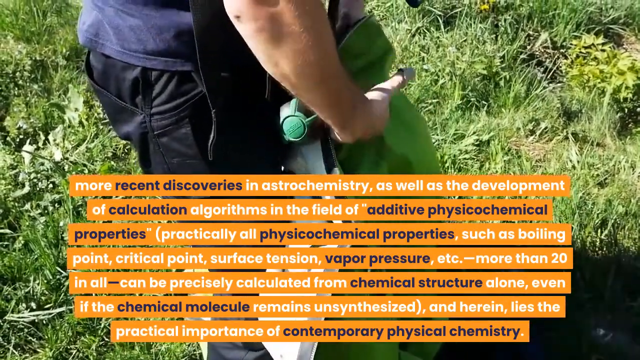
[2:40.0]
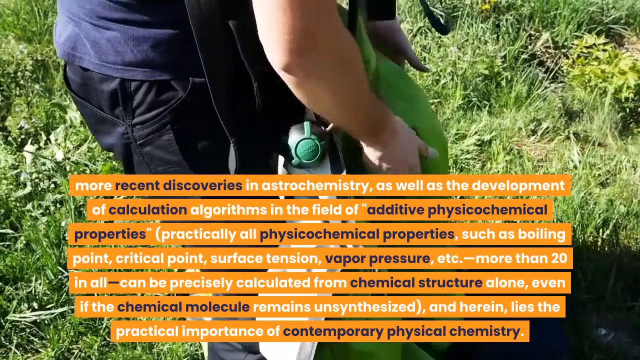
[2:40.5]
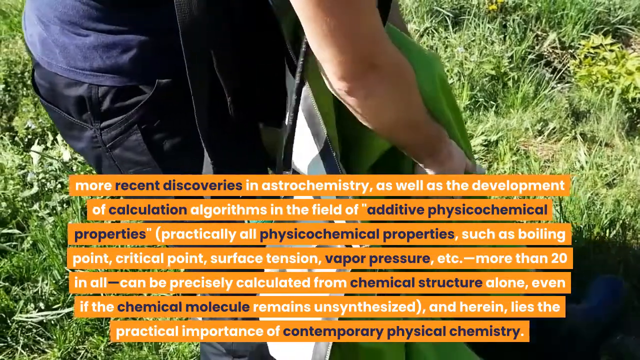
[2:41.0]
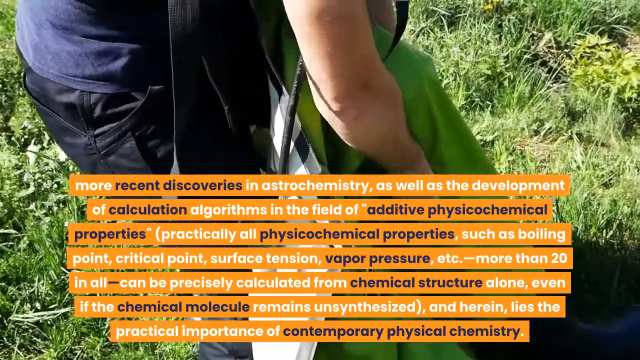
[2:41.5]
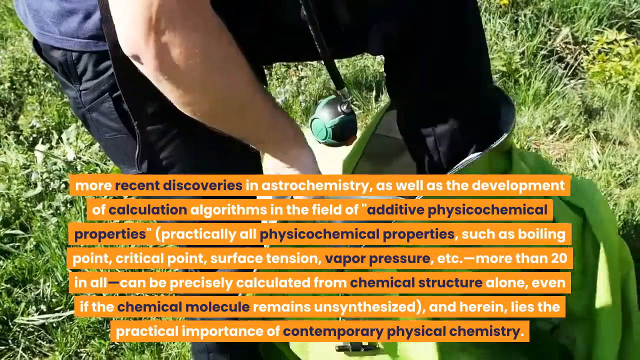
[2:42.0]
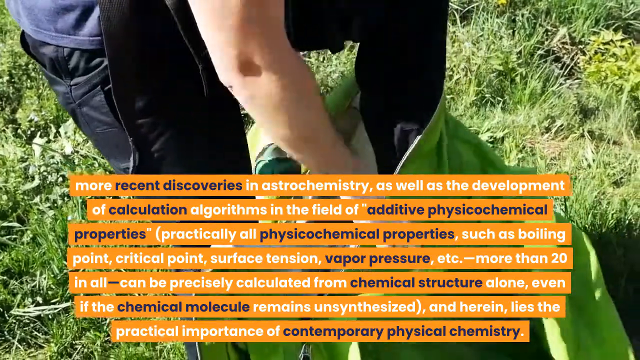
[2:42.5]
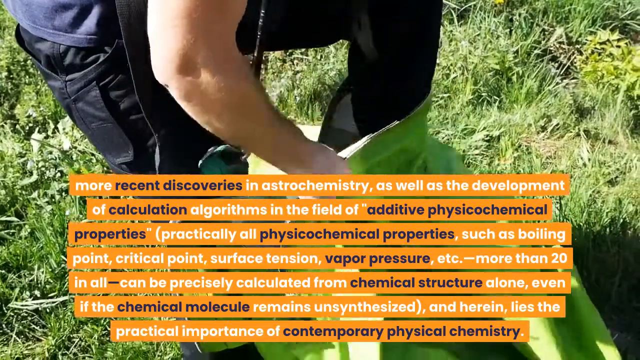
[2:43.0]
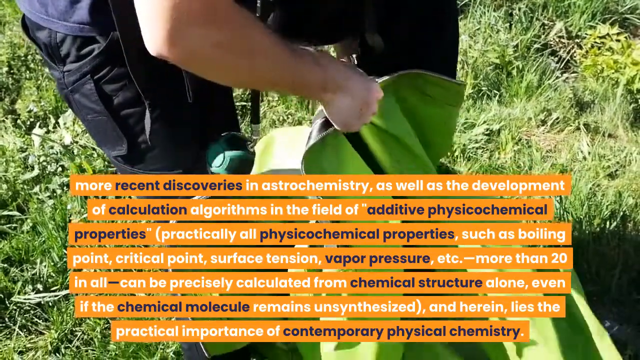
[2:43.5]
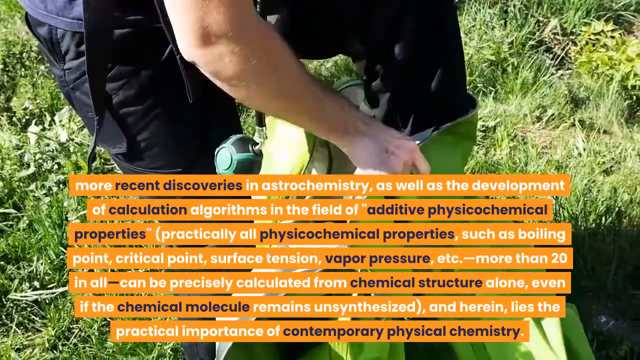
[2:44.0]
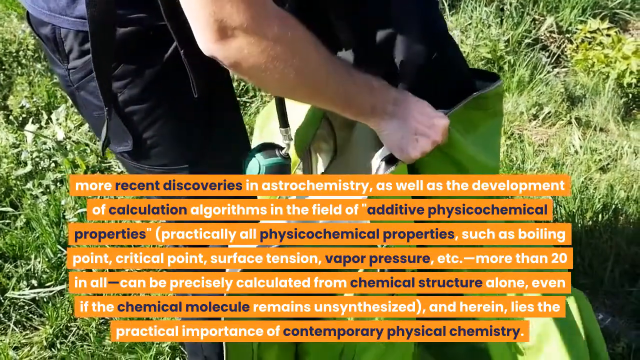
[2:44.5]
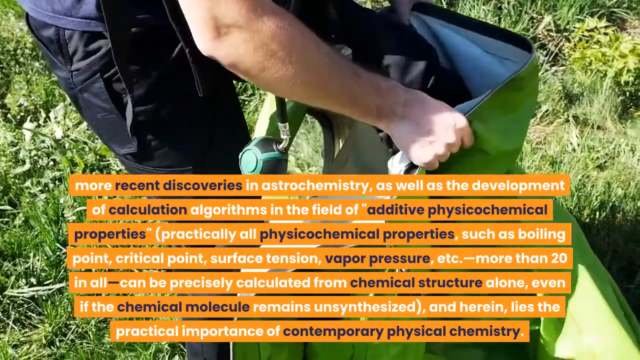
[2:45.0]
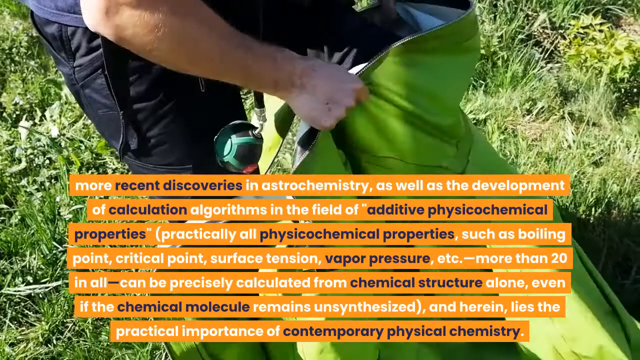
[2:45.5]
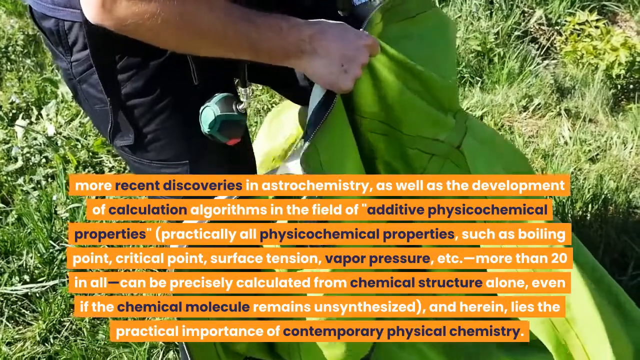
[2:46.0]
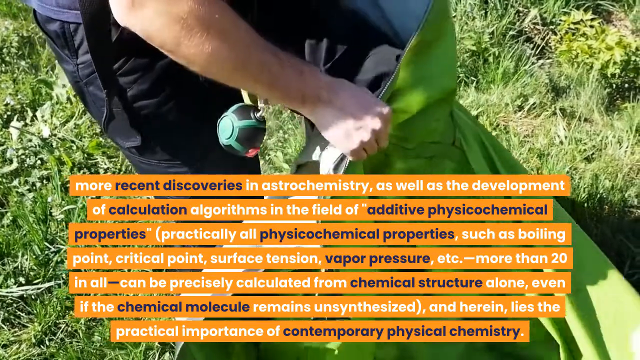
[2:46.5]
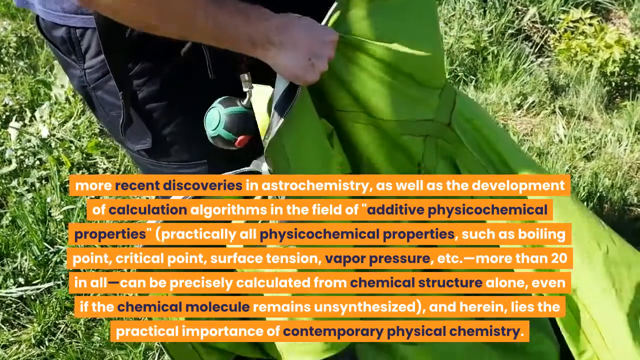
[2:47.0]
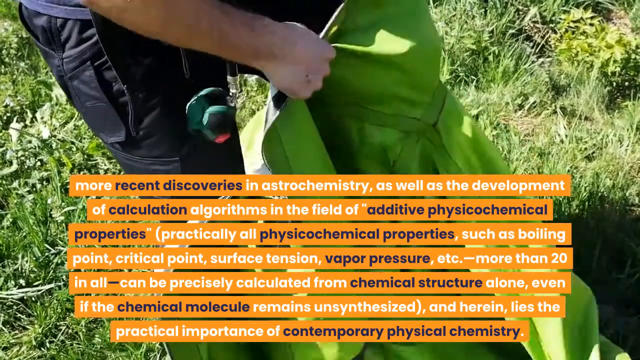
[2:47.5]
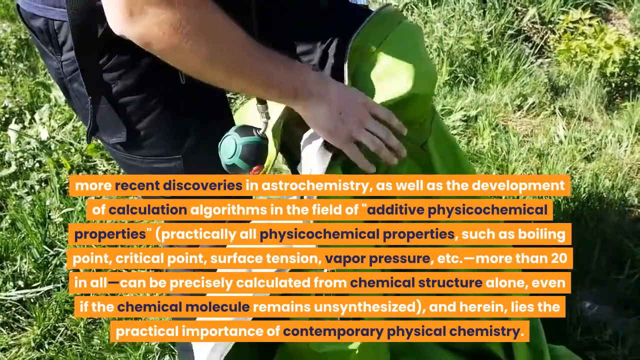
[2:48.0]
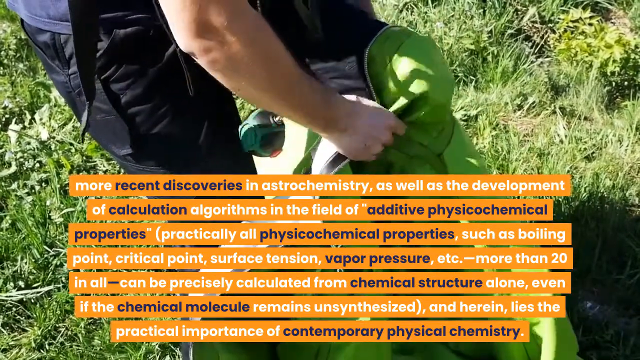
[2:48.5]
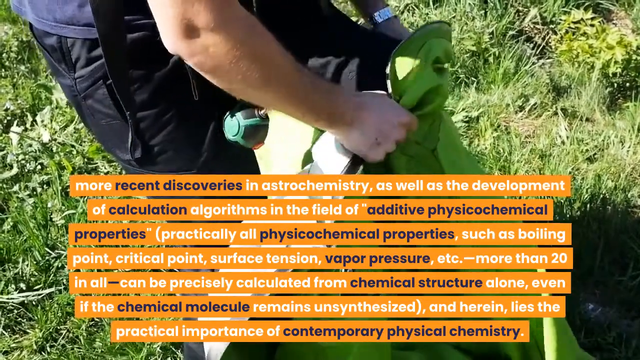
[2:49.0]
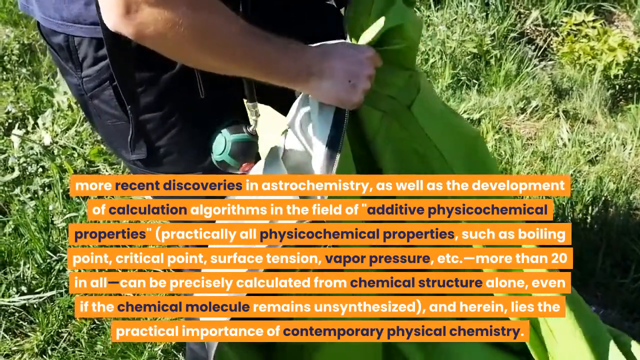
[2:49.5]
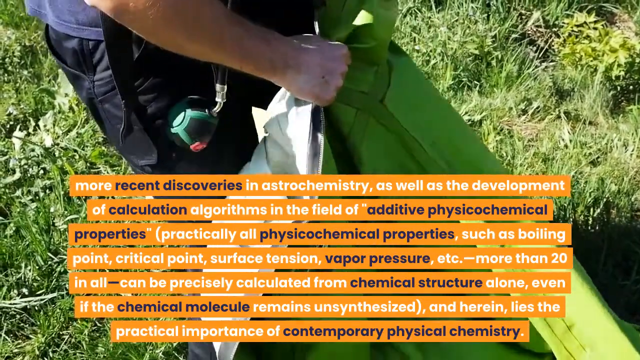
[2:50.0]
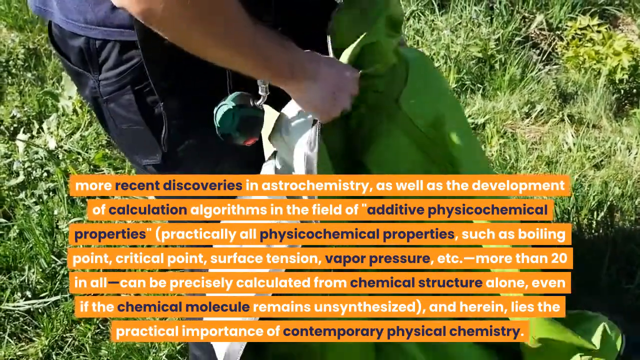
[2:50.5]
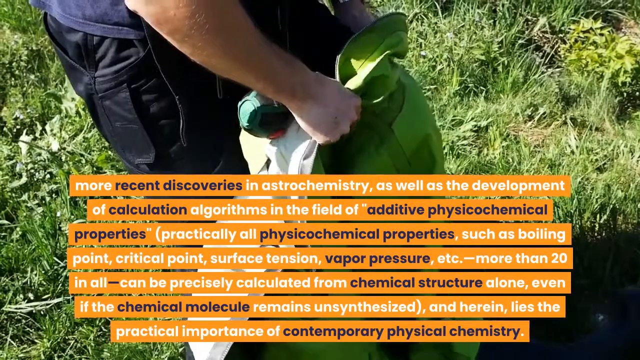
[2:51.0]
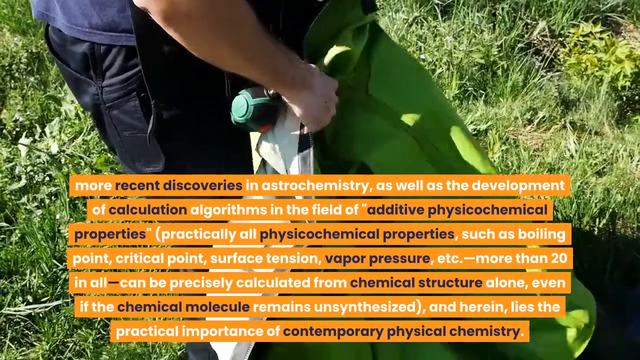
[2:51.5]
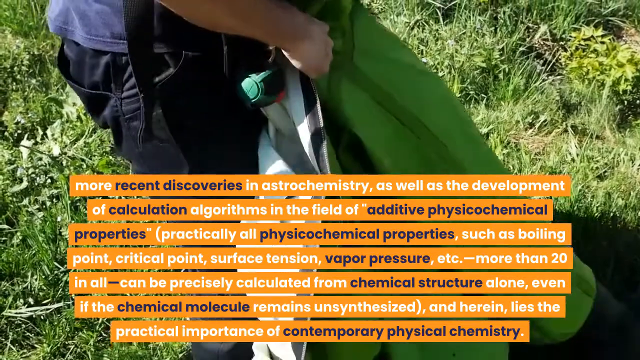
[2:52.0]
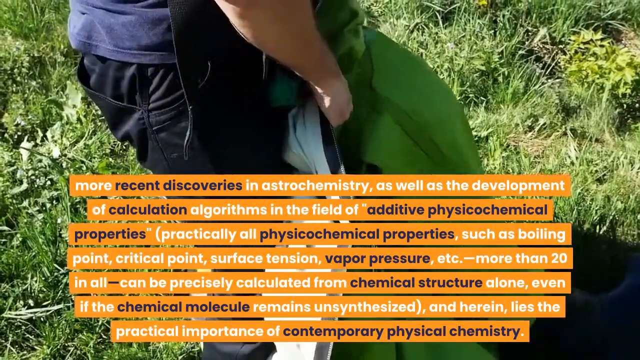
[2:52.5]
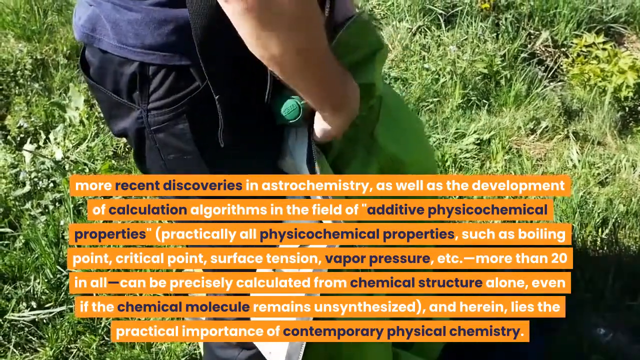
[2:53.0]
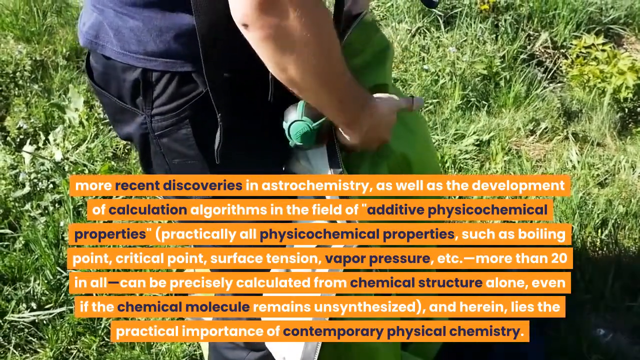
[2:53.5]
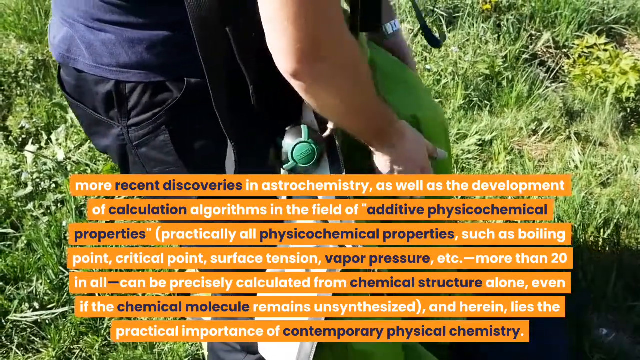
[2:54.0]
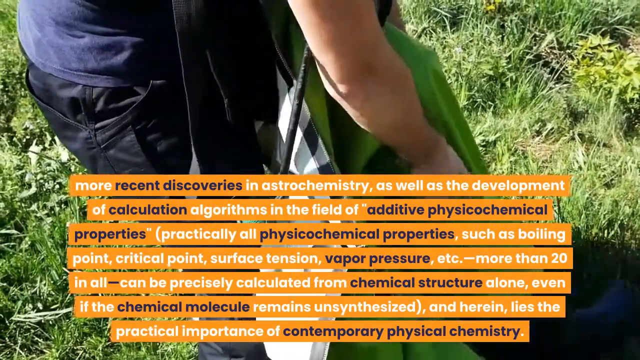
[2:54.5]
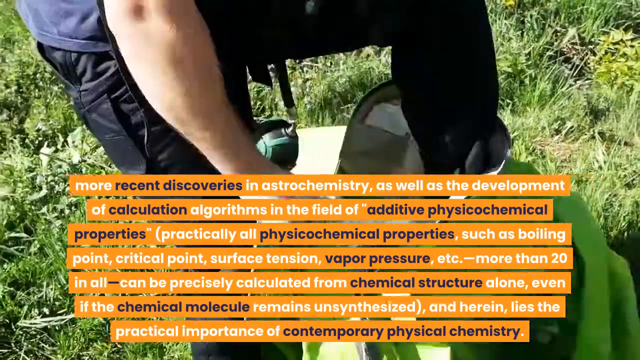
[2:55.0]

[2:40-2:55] Behind the caption, the person adjusts the green suit onto their lower left leg and foot. The caption on the orange rectangular background continues for the rest of the video, with each line of text printed on orange rectangular strips. The bolded parts of the captions are in black and the rest is in white; the definitions and small keywords in between seem to be mostly in black. The man's black pants have some pockets. Behind him, the grass he stands on is long and doesn't seem to have been cut for a long time, and there seem to be a lot of weeds in the area.